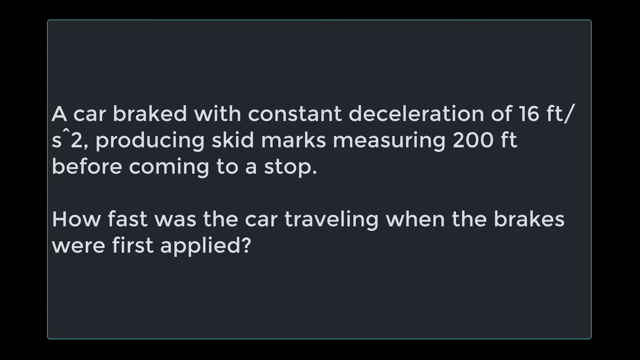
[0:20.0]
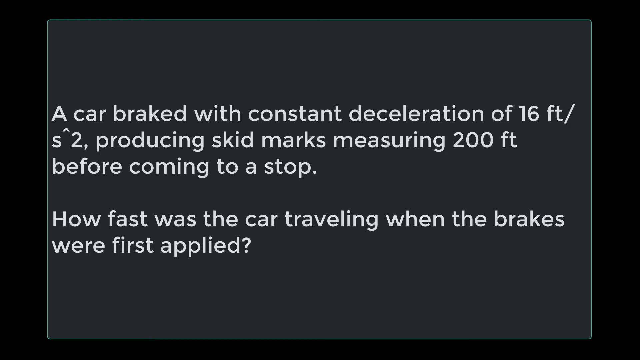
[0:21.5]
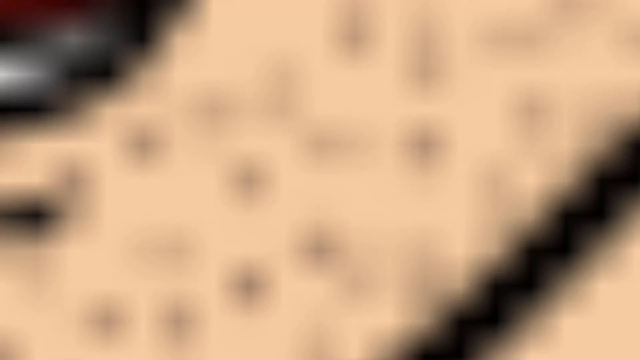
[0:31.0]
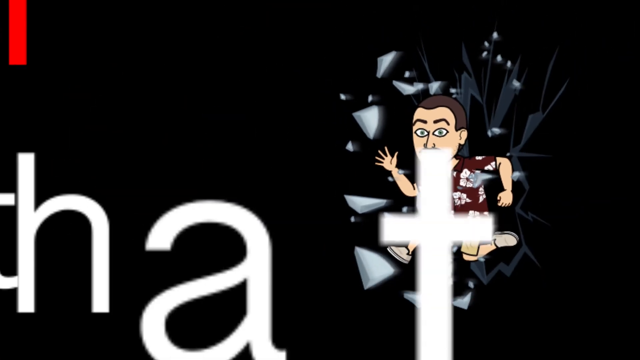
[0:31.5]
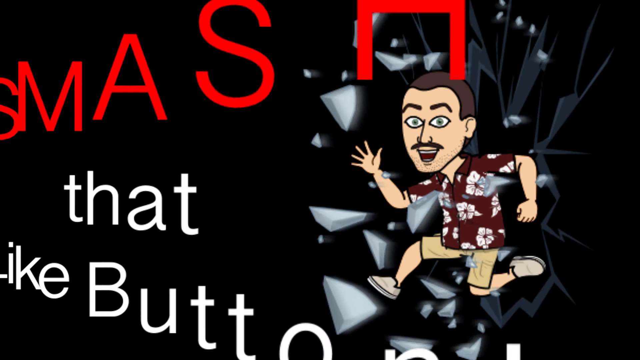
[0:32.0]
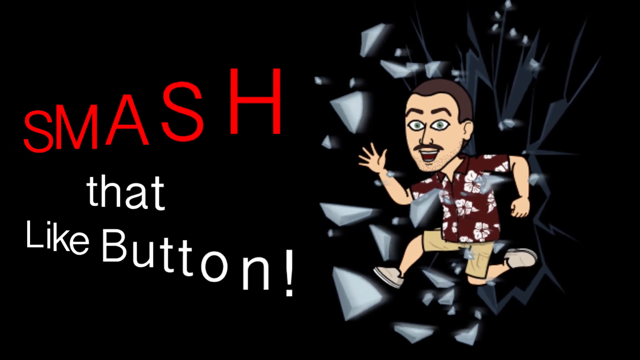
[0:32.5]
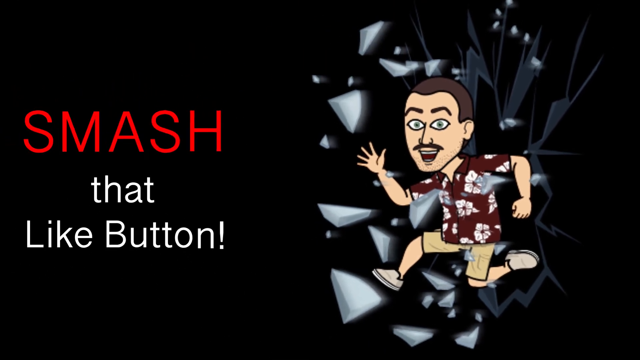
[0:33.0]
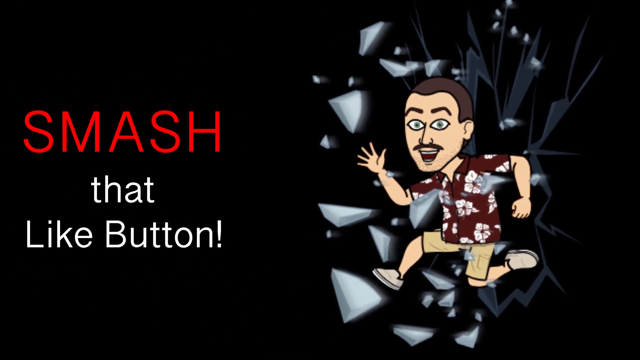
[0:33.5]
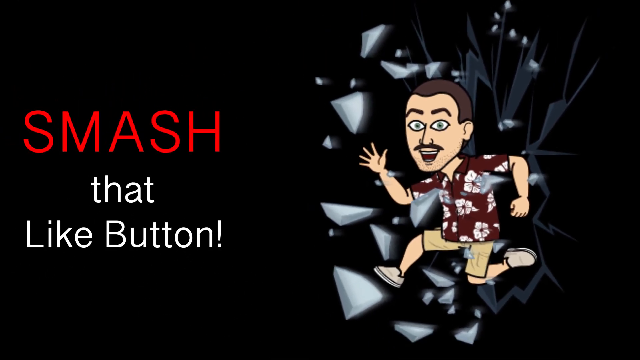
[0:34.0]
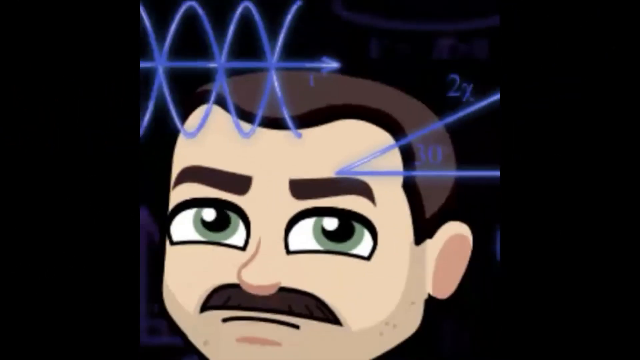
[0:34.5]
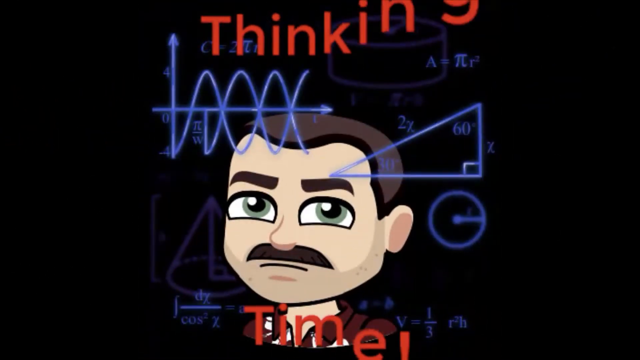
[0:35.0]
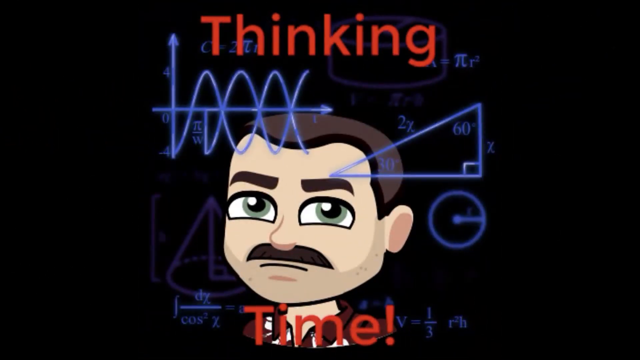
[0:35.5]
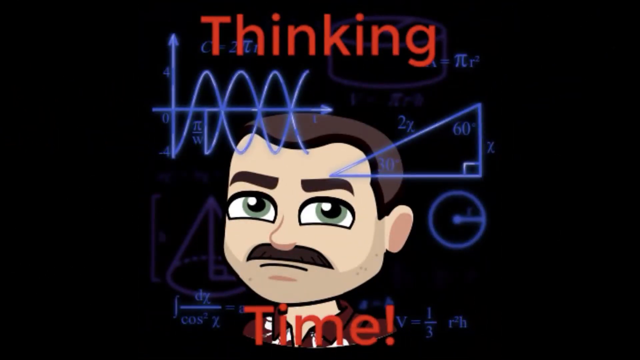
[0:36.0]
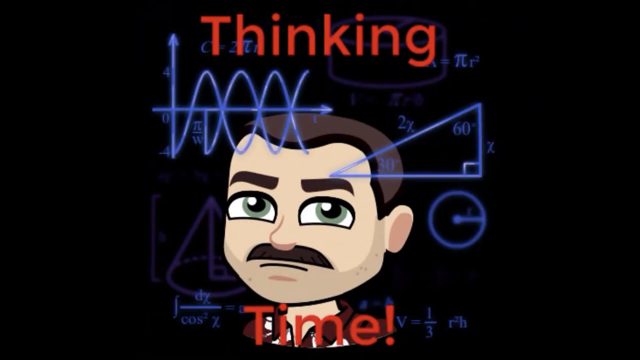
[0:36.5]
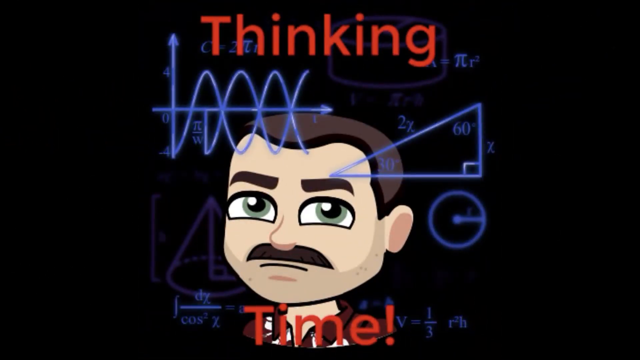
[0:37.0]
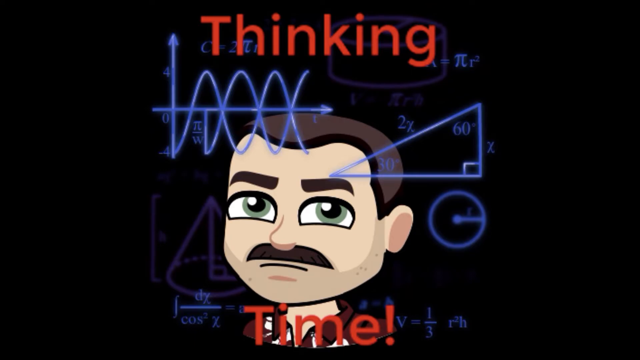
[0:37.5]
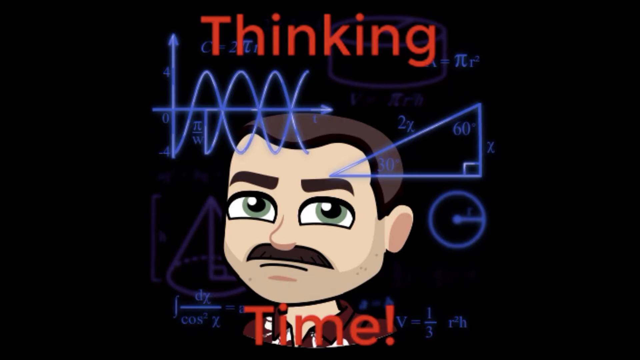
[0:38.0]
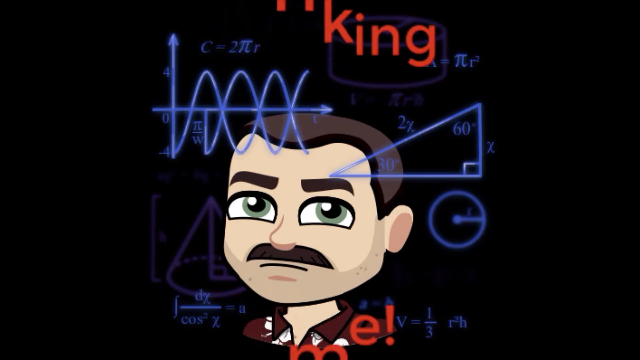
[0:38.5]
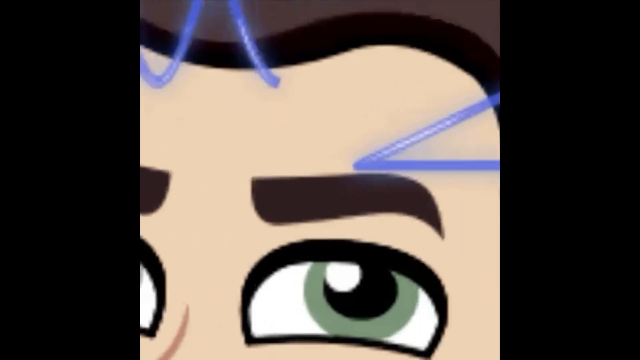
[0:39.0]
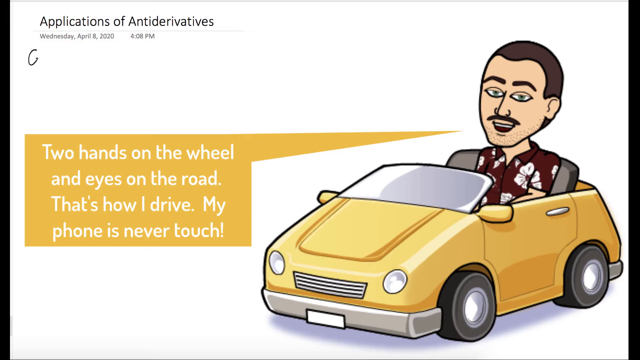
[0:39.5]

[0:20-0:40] The black screen with white text reading "a car braked with constant deceleration of 16 feet per second squared, producing skid marks measuring 200 feet before coming to a stop. How fast was the car travelling when the brakes were first applied?" lingers on screen for several seconds. Then an illustration of a man in a Hawaiian shirt and beige shorts appears on the right side of the screen. His right hand is held up, his left hand faces down, and he looks like he is running towards the left of the screen. He has a smile on his face. Broken glass is behind him, as though he has jumped through a window. Text in red and white on the left says "smash that like button." This disappears, and a close-up of the caricature's face follows, with blue equations superimposed over his head and red text across the top and bottom of the image that says "thinking time."